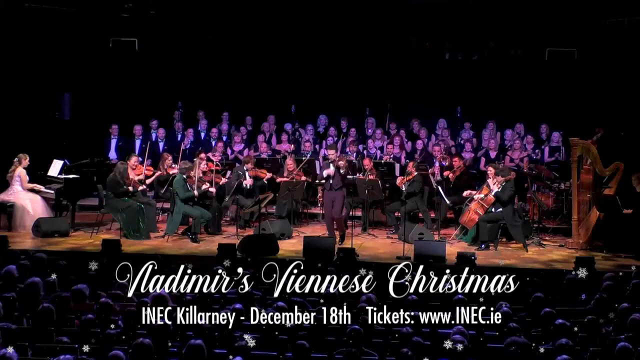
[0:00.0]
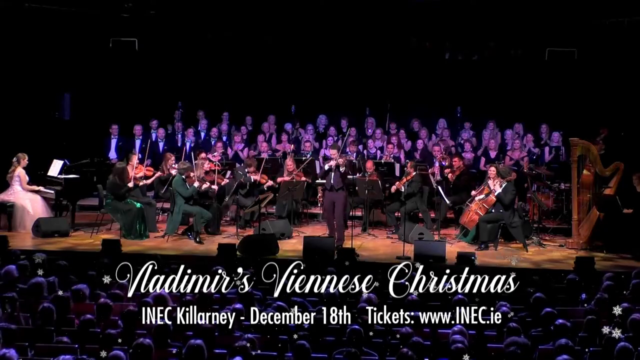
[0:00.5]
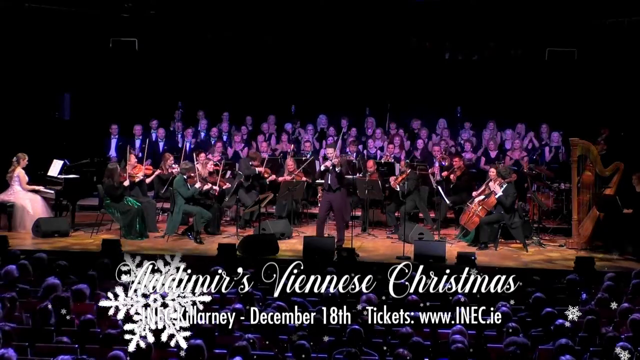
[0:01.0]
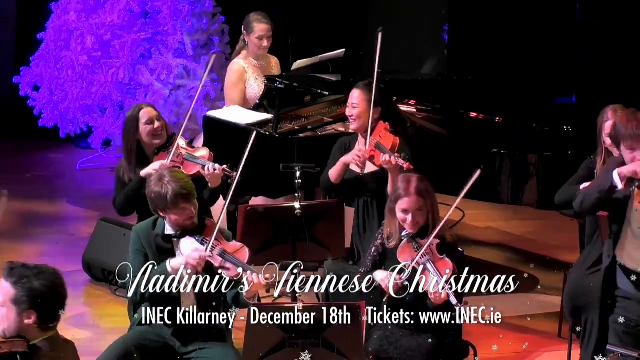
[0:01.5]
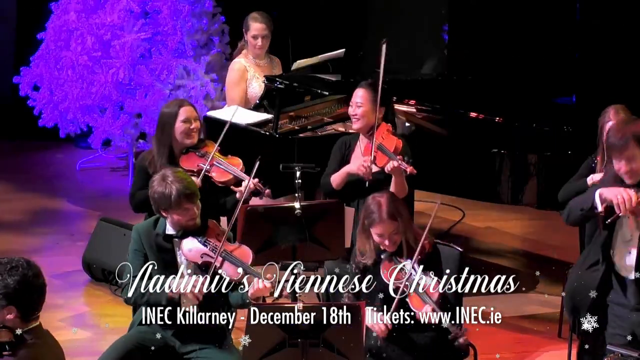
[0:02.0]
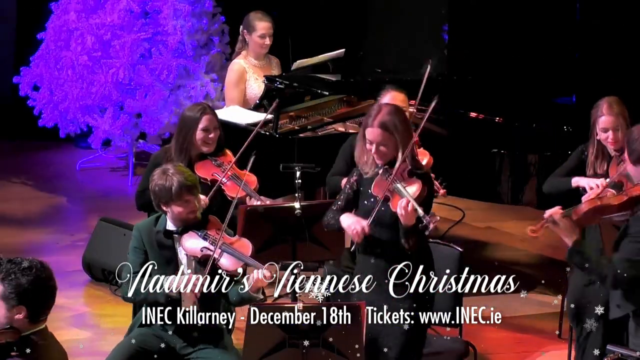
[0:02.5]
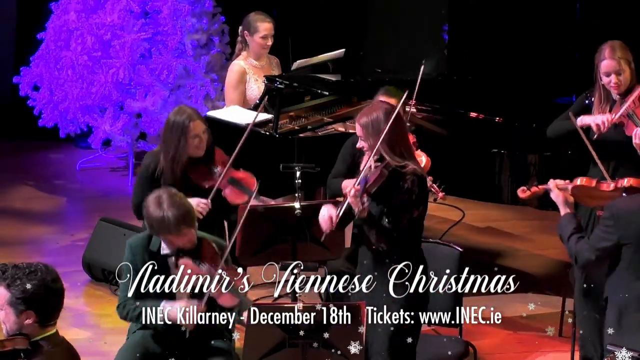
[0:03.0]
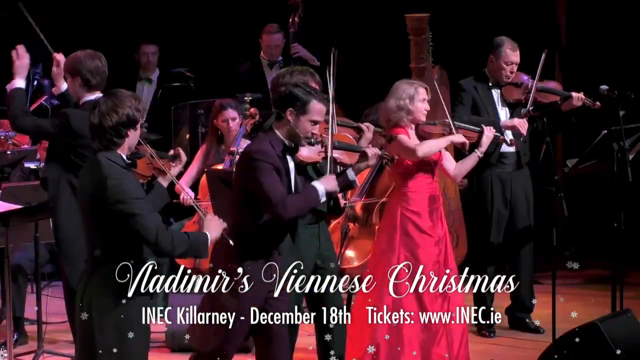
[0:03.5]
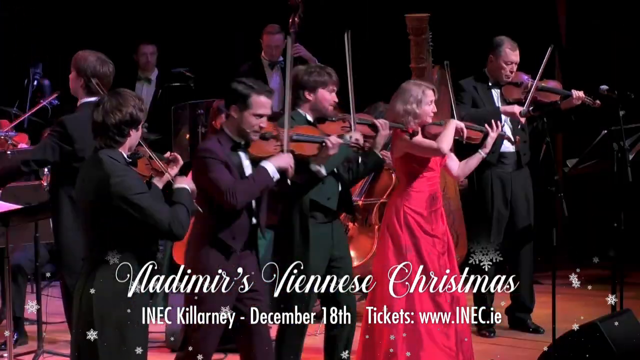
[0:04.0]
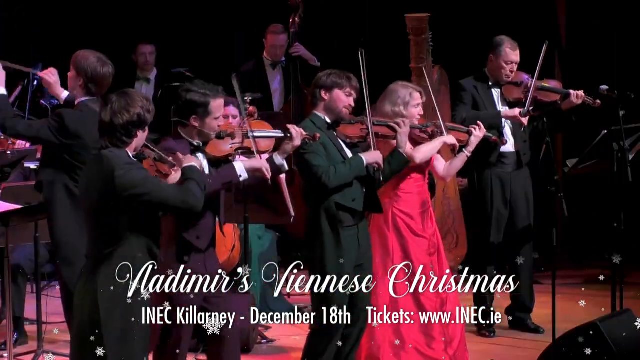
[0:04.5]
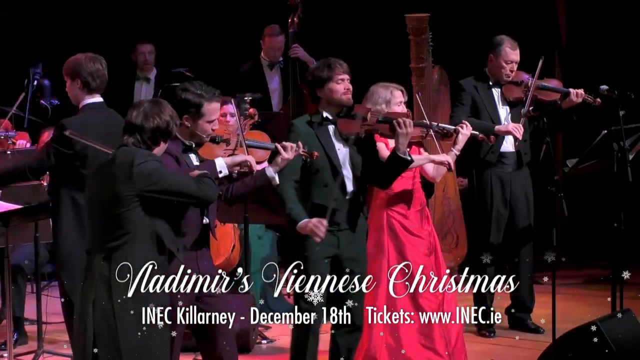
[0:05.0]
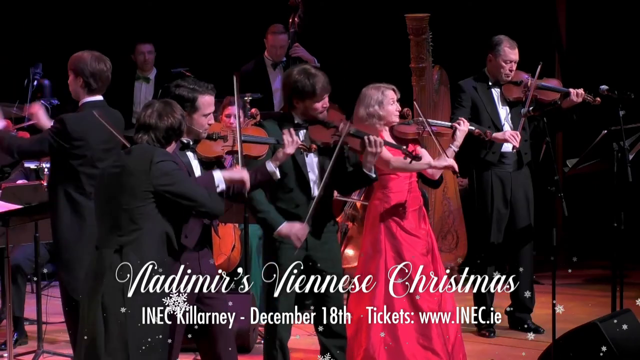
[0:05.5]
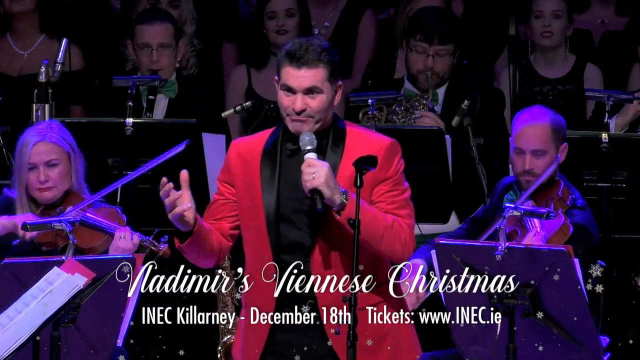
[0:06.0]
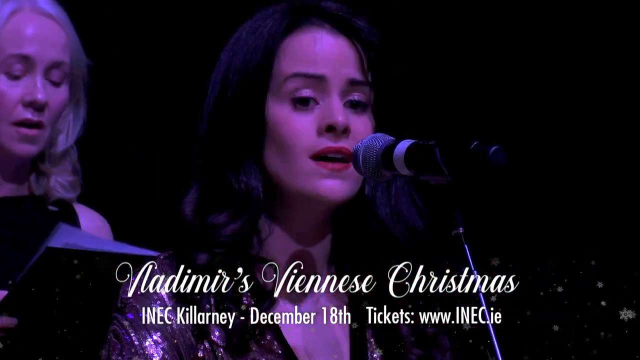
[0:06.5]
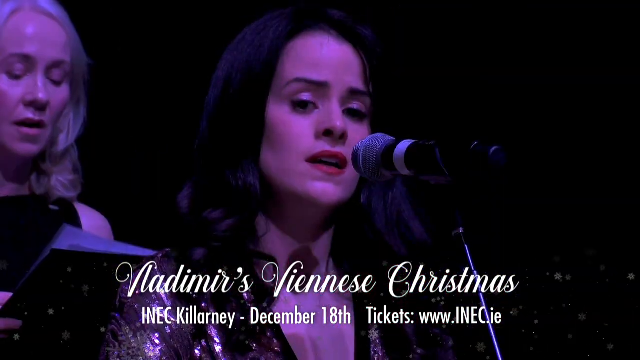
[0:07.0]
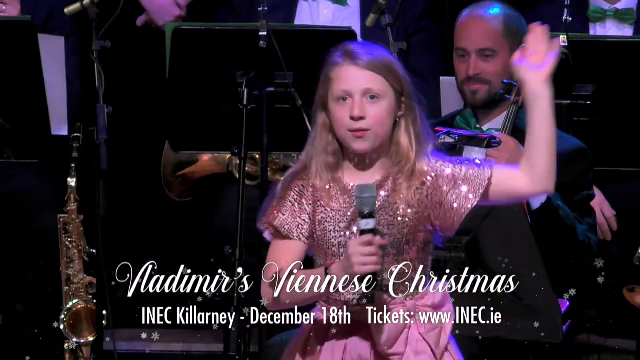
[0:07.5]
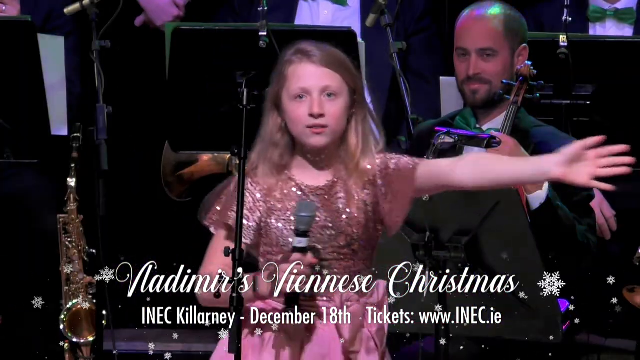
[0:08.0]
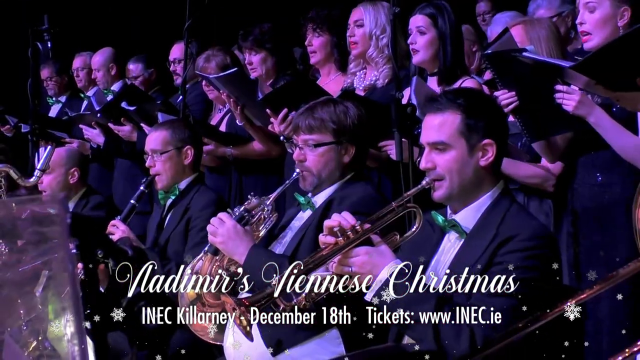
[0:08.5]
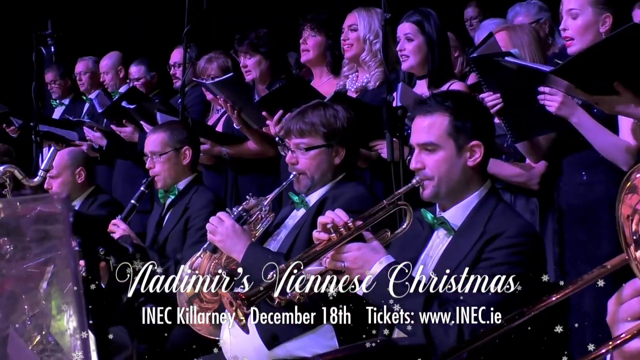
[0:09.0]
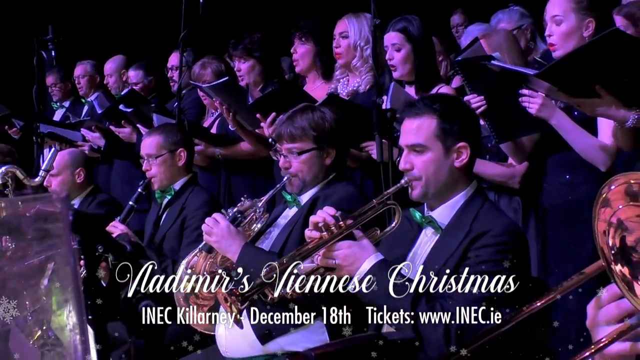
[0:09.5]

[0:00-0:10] The opening screen shows text at the bottom in white cursive reading "Vladimir's Viennese Christmas," and below it, "INEC killarney - December 18th tickets www.inec.ie." On the stage, an orchestra plays instruments swiftly and happily. Part of the group is shown cheering and standing. A man and a woman play violins in the front; the woman is in a red dress and the man is in a tux. To their left, two other men in suits play violins, and to the right of the woman in red, a man in a suit also plays a violin. A man in the middle in a bright red jacket sings. The shot flashes to a woman with a microphone singing, and a little girl in a pink dress singing, with a whole group of people singing behind an orchestra of people playing violins.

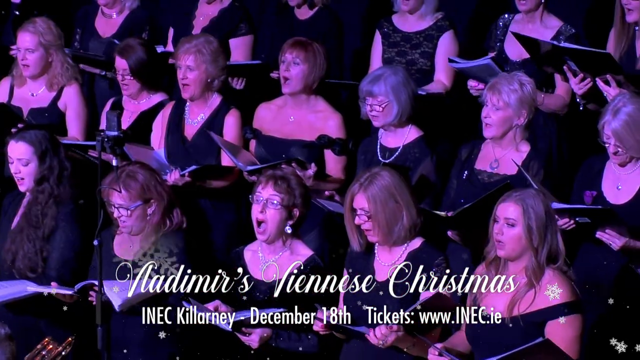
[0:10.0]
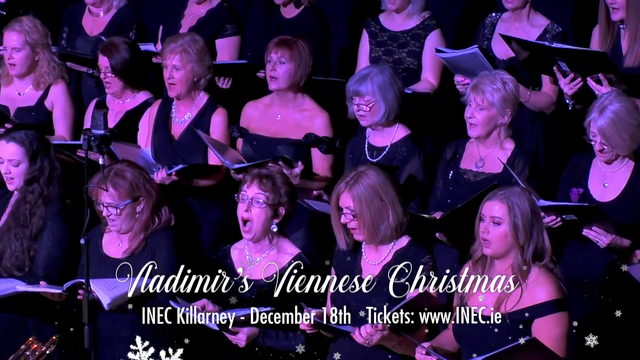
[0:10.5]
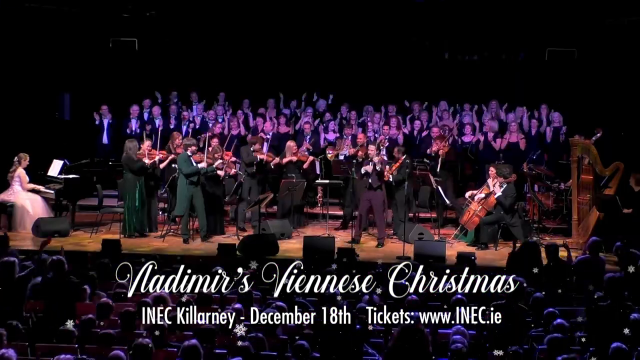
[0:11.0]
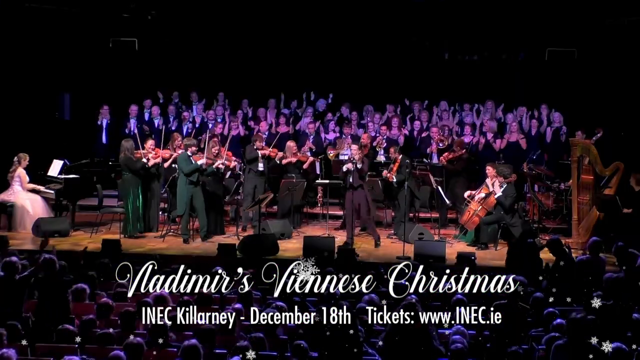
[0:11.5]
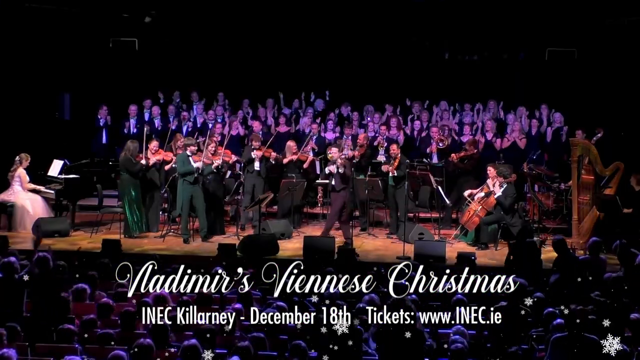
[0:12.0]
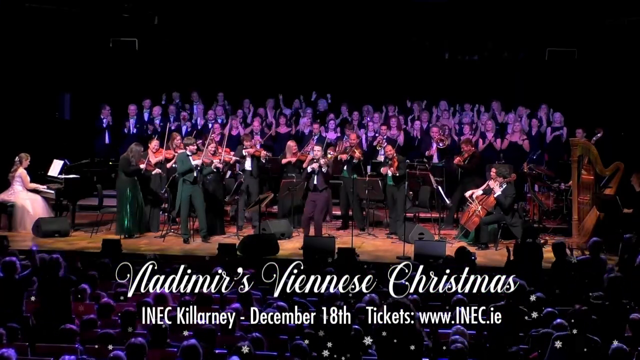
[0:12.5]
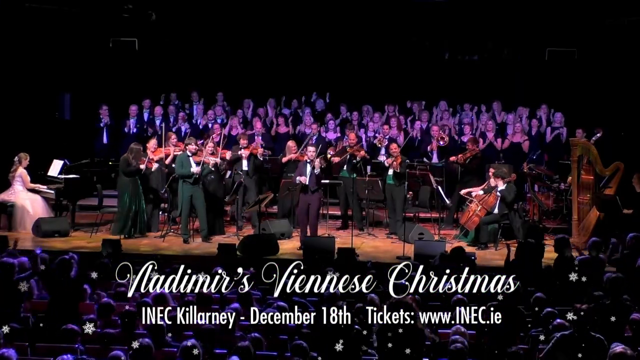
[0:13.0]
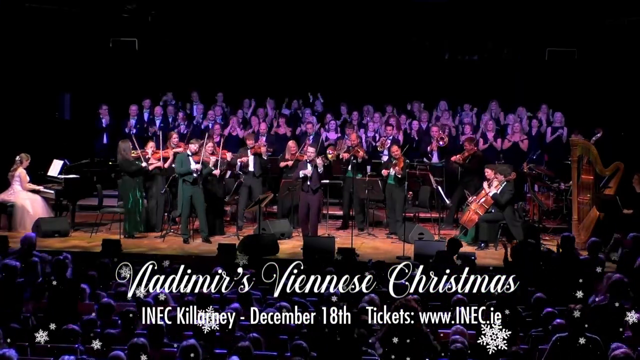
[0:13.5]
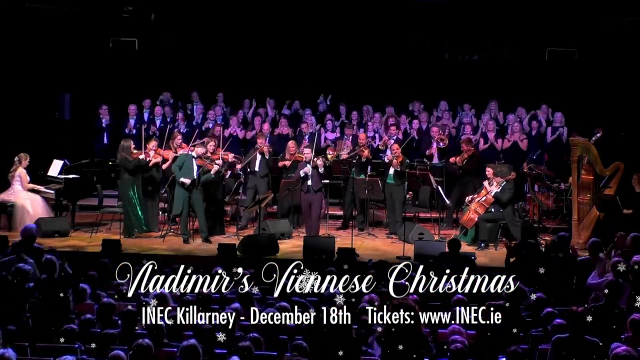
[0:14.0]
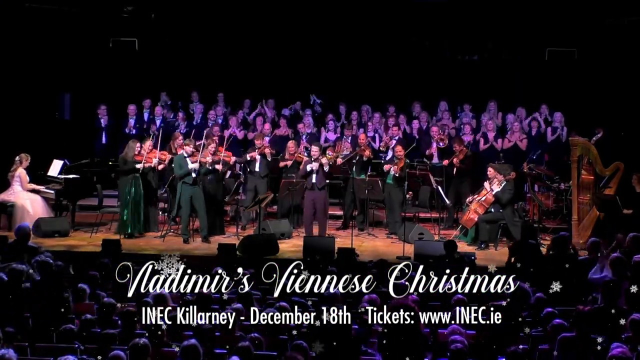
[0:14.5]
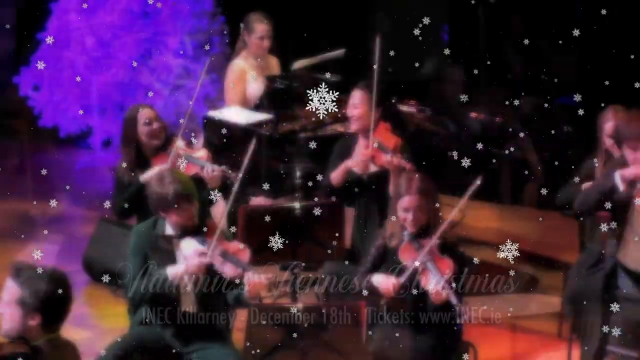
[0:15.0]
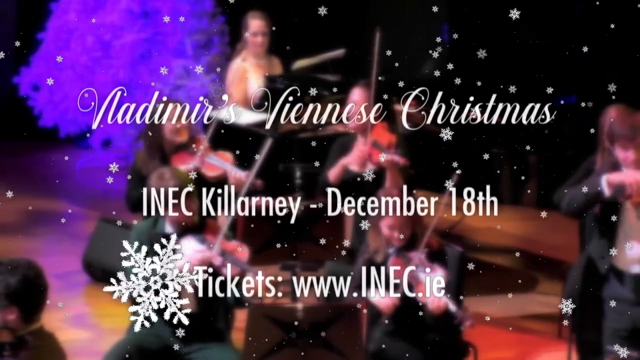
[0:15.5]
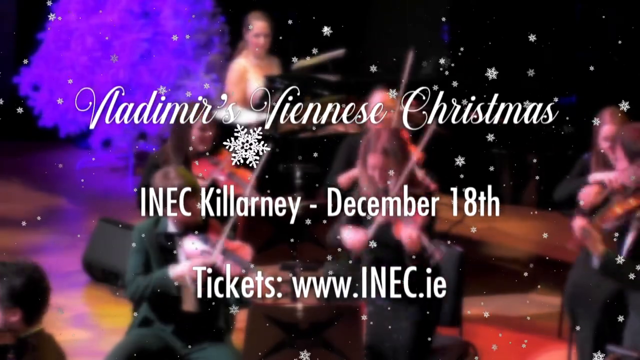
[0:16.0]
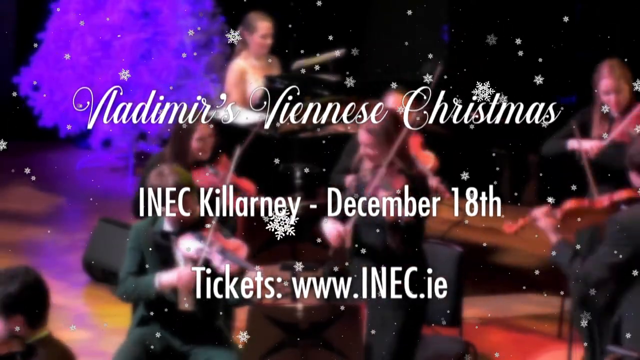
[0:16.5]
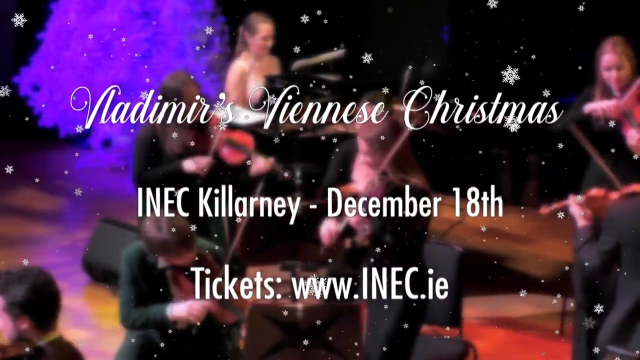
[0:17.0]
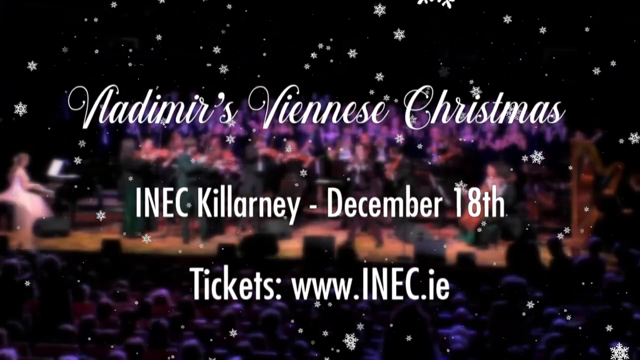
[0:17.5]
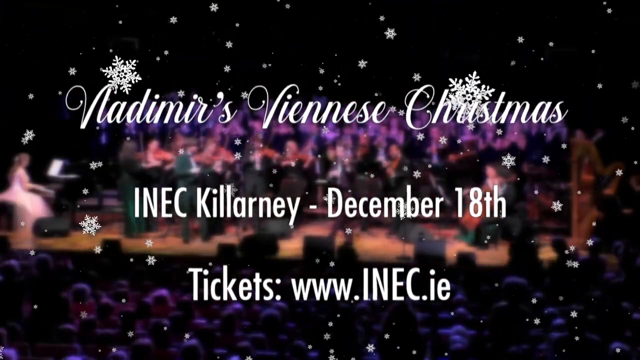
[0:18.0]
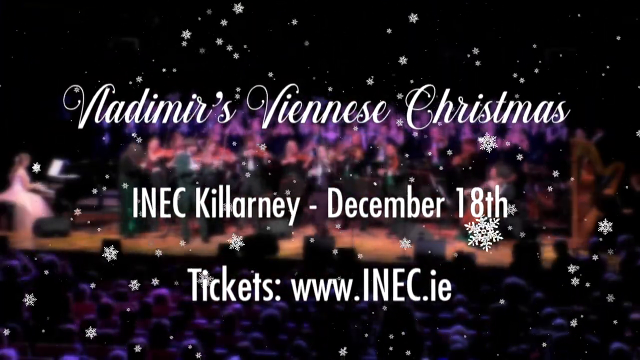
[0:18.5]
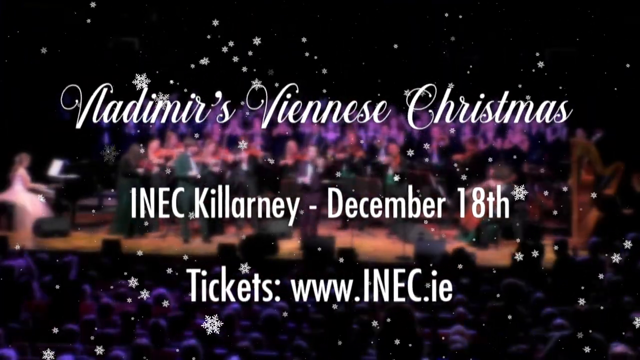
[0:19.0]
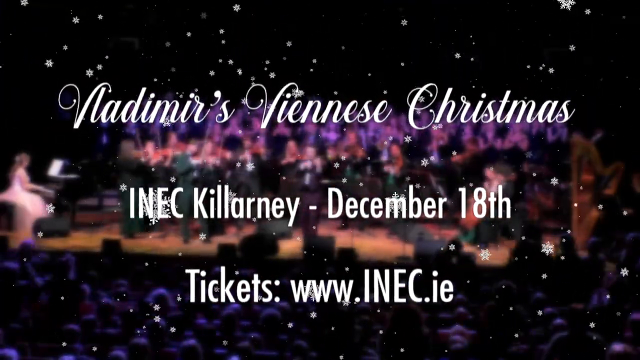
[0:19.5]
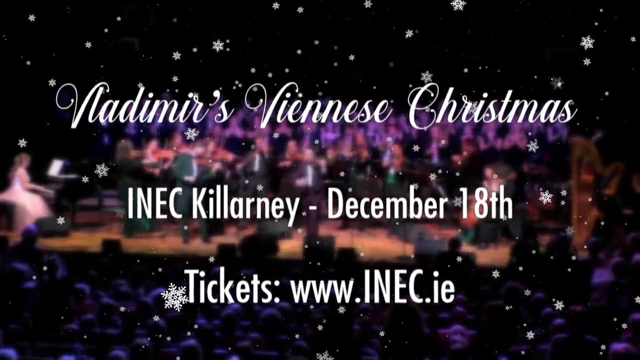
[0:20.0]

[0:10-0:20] A choir of women, apparently in three rows, sings. At the bottom of the screen, white cursive text reads "Vladimir's Viennese Christmas," with "INEC killarney - December 18th" and "tickets" below it. The next screen has a blurry background of the people playing in the orchestra. On top of it, in white cursive, is "Vladimir's Viennese Christmas," with "INEC killarney - December 18th" below it, and below that, "tickets www.inec.ie." Cartoon-like snowflakes rain down on the screen. Everything in the background is blurred, but the stage and the people performing are recognizable. On the left, the girl playing the piano is wearing pink.